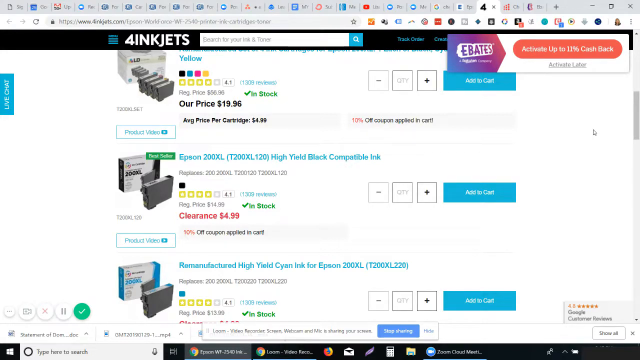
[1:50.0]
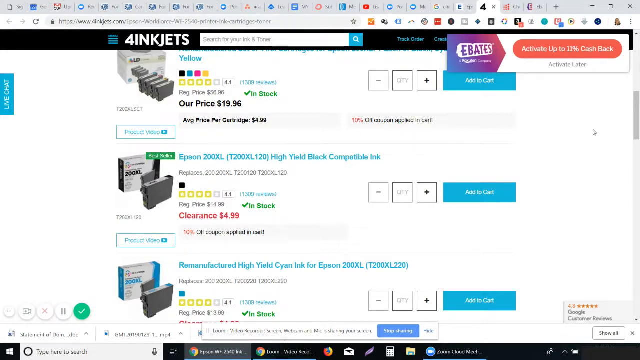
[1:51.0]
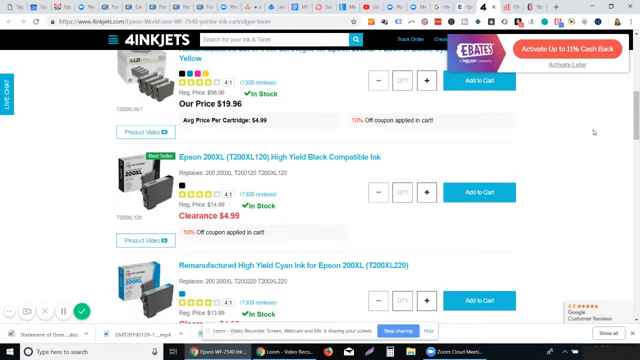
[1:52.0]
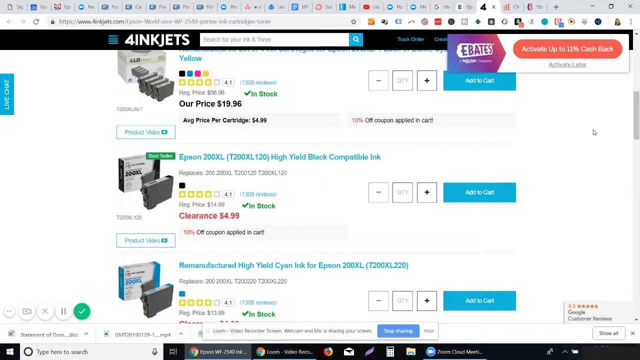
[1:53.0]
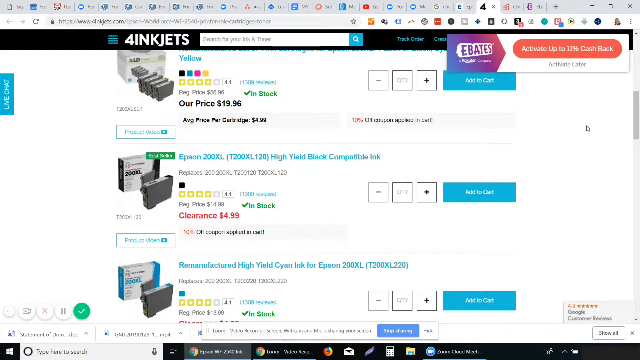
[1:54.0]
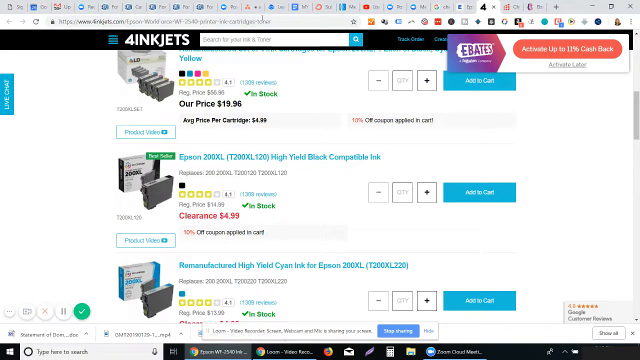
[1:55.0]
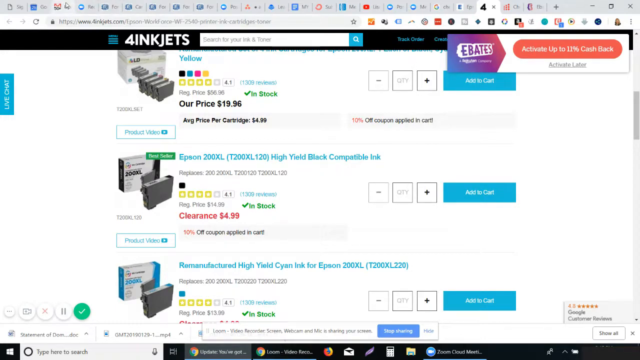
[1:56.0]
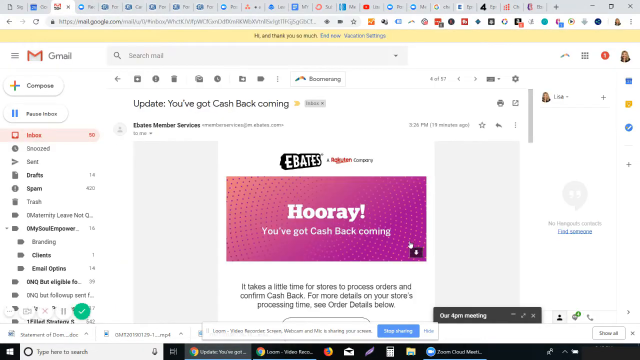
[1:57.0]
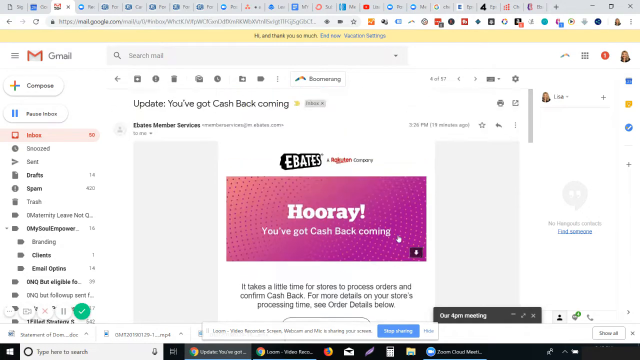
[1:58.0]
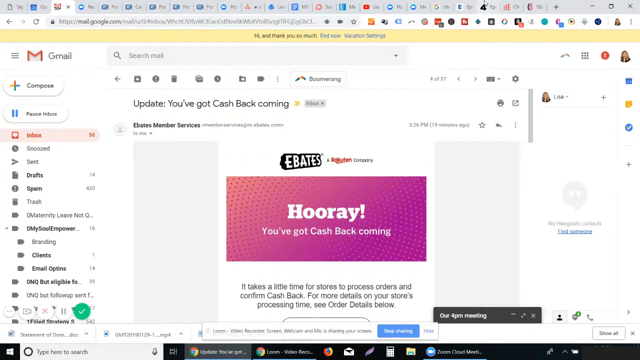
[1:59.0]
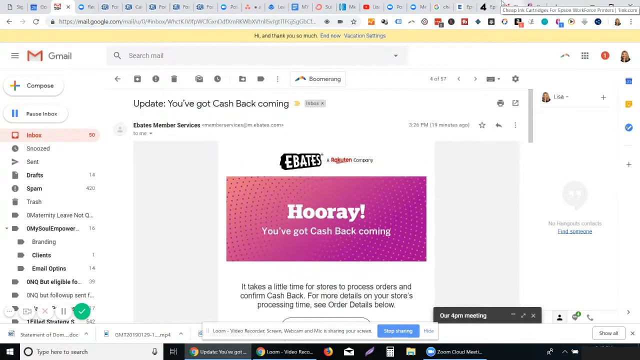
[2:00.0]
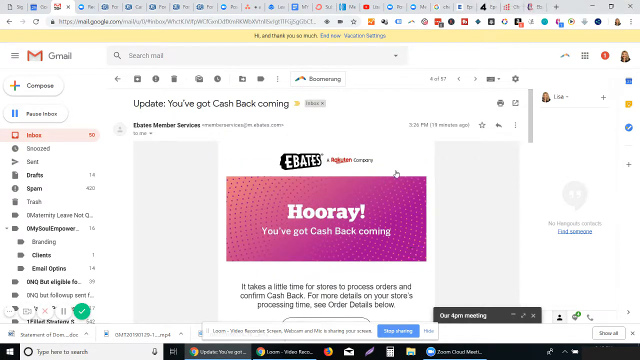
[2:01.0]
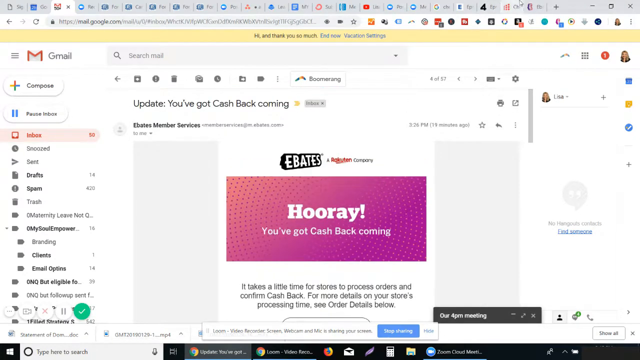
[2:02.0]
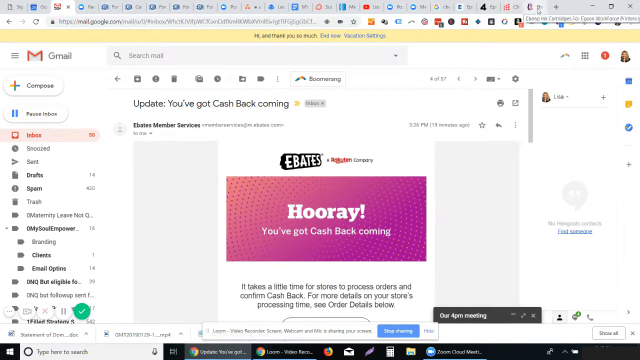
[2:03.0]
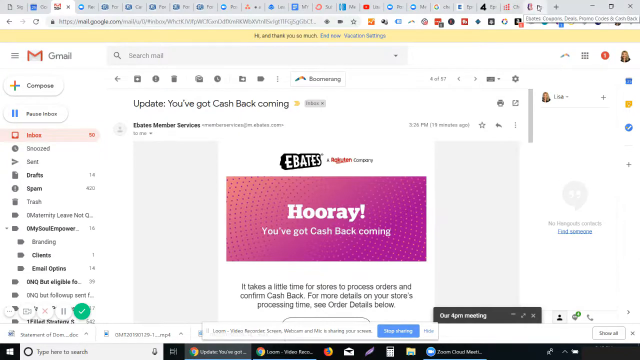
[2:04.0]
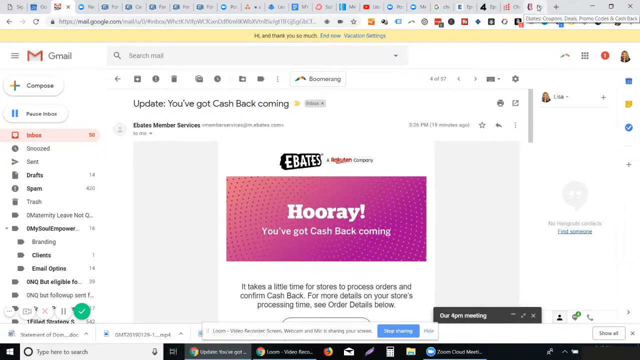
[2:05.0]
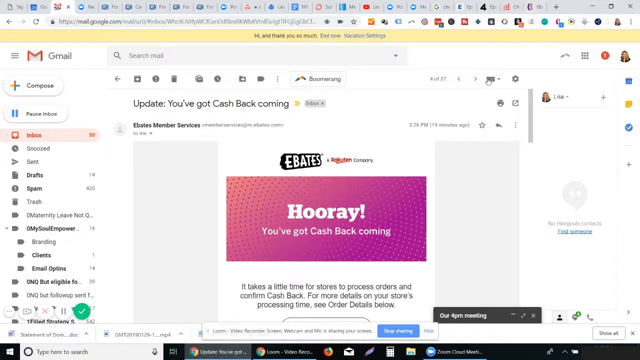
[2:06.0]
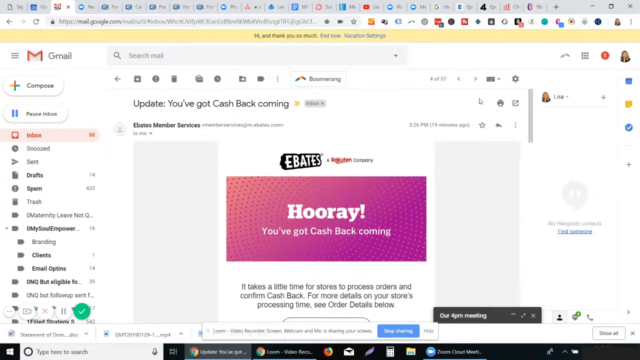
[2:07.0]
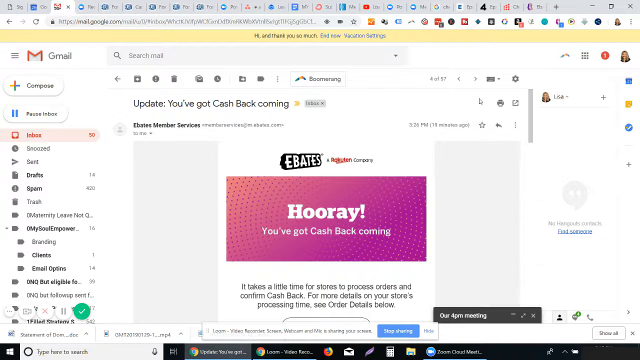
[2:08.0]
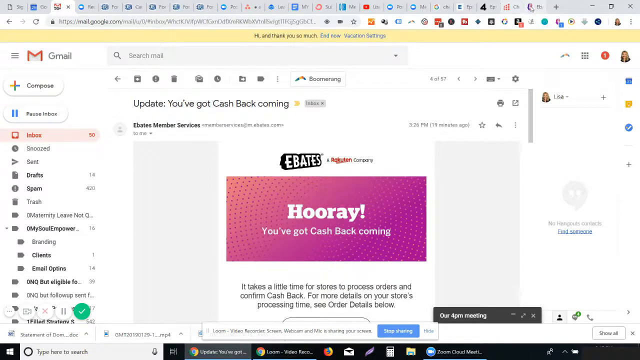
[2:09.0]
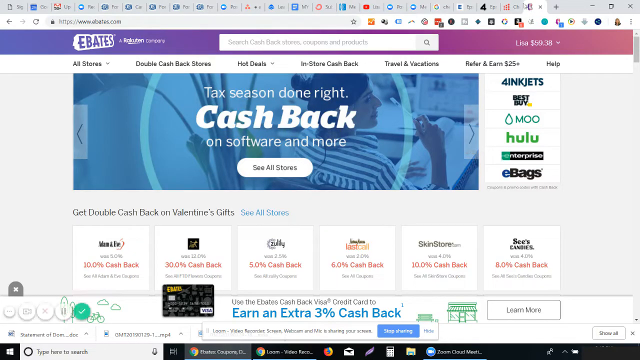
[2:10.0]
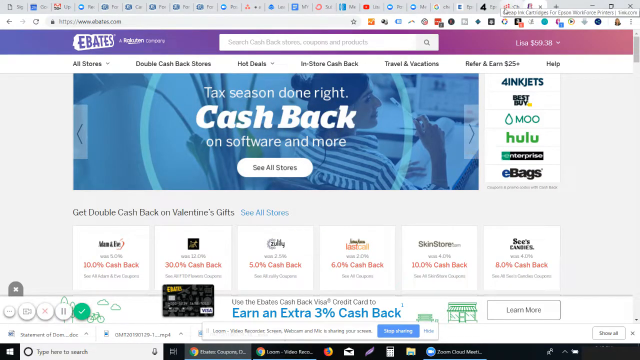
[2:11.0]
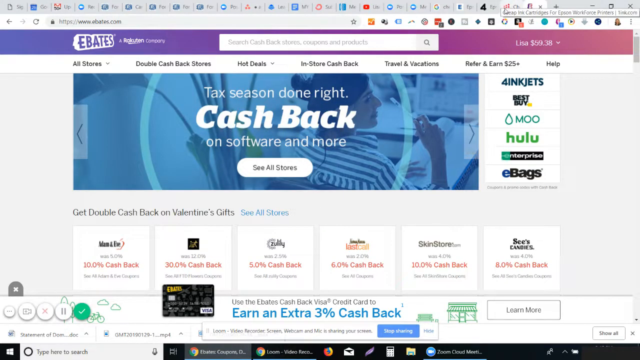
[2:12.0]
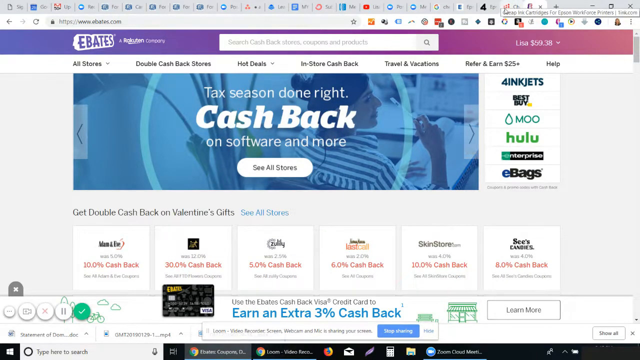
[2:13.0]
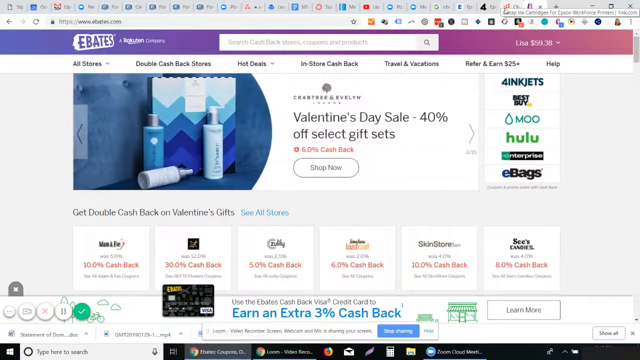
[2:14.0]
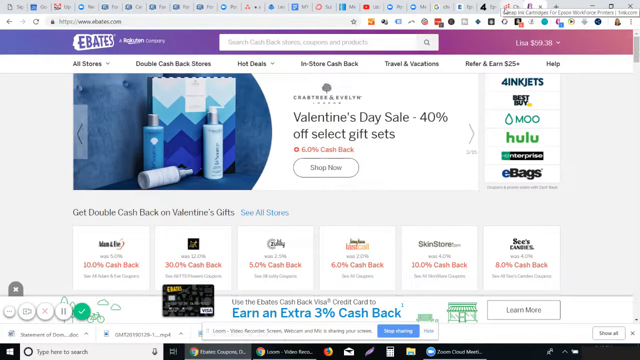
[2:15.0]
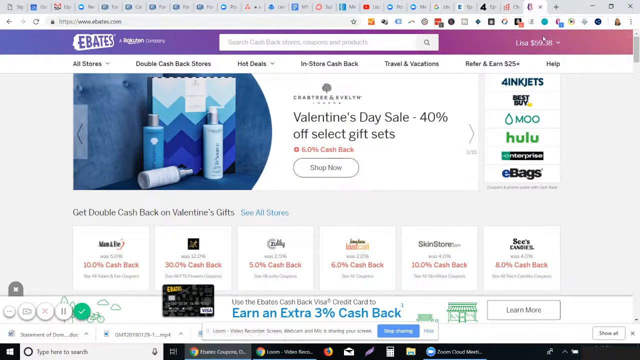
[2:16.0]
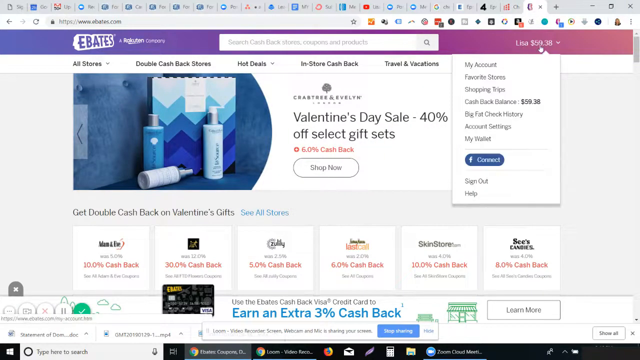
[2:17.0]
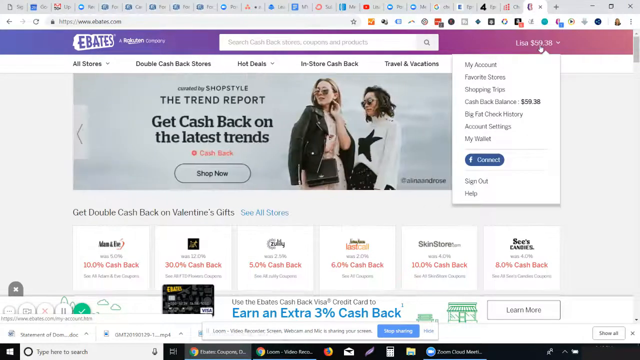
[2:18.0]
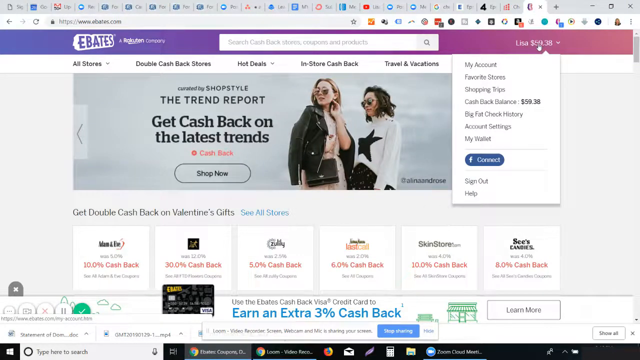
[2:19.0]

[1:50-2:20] The person is on the four inkjets website with a large number of tabs open, maybe at least 15. The mouse clicks the third tab, an email in Gmail from Ebates reading "you've got cash back coming" and "hooray you've got cash back coming. It takes a little time for stores to process orders and confirm cash back. For more details on your store's processing time see order details below." The person then goes back to Ebates, which reads "tax season done right" and "Valentine's Day 40% off select gifts." The person clicks on a name in white in the upper right-hand corner that apparently reads Lisa.